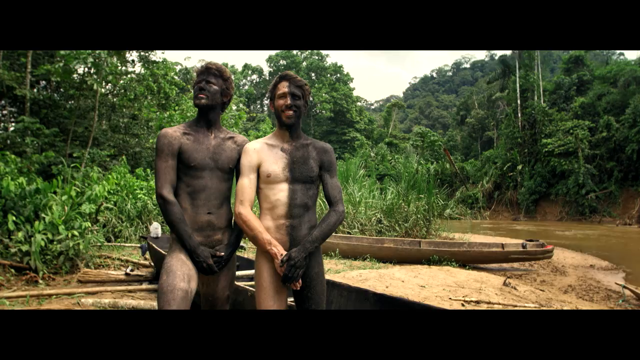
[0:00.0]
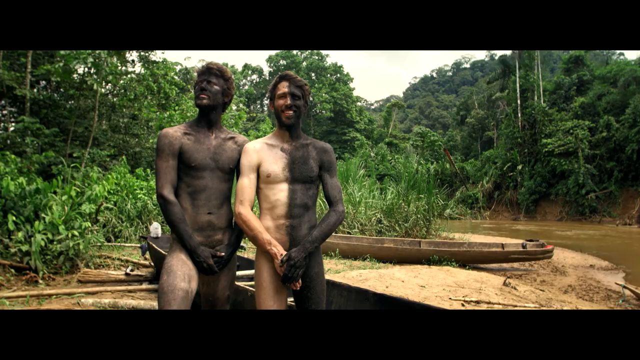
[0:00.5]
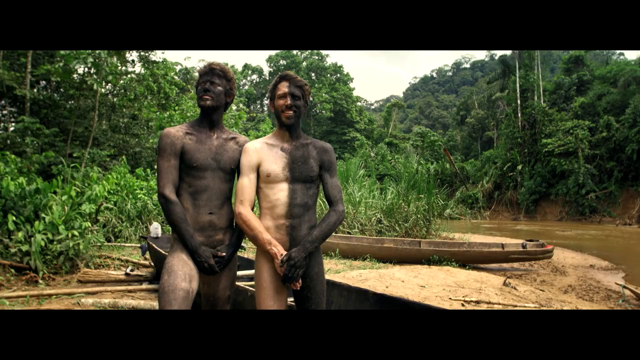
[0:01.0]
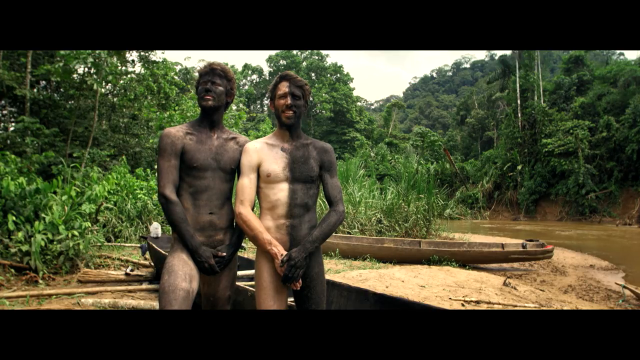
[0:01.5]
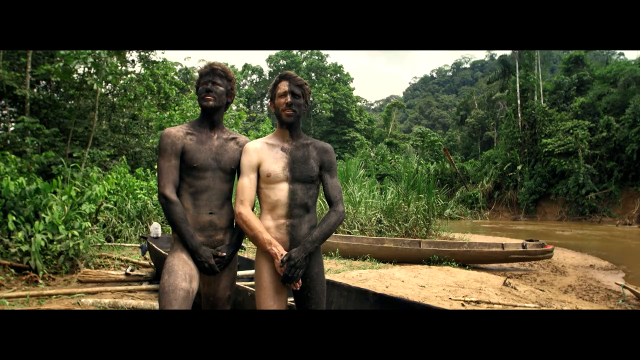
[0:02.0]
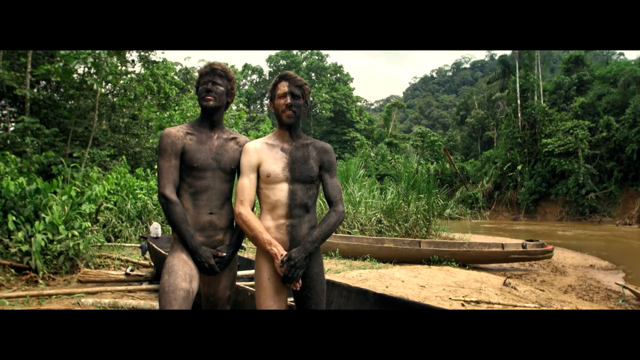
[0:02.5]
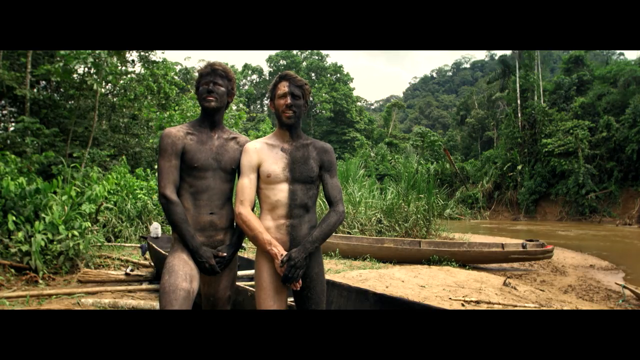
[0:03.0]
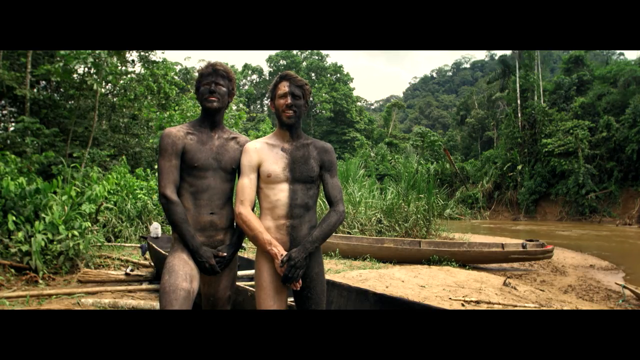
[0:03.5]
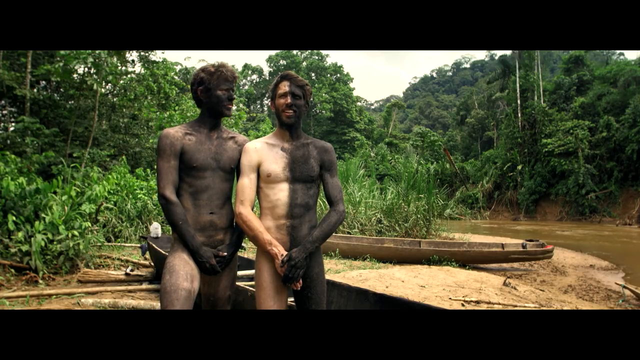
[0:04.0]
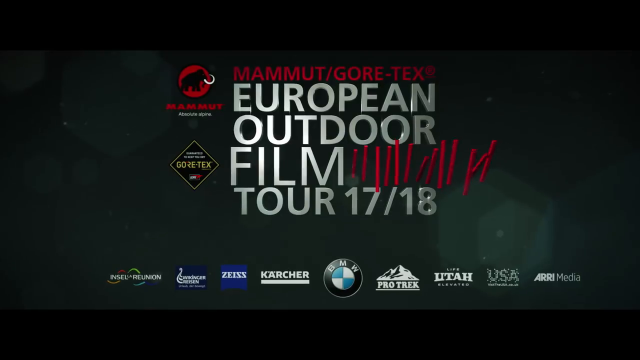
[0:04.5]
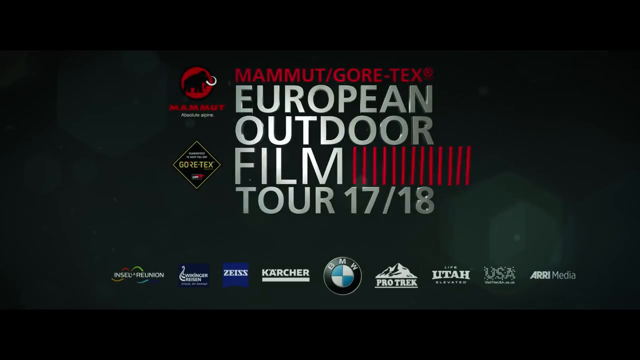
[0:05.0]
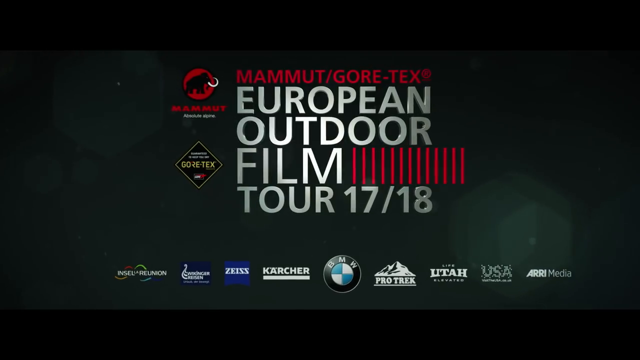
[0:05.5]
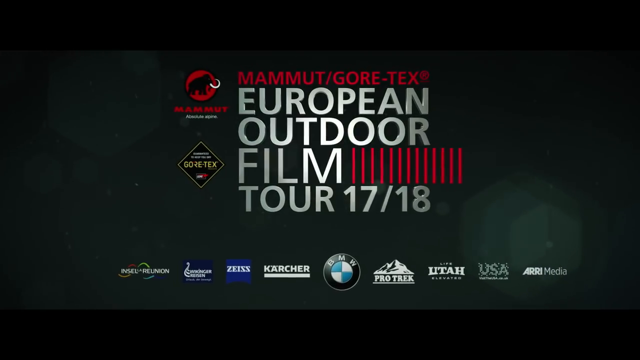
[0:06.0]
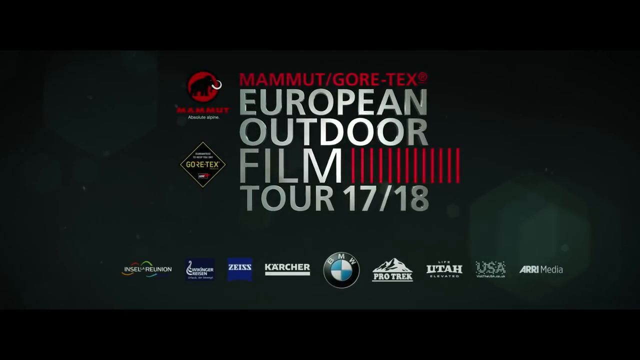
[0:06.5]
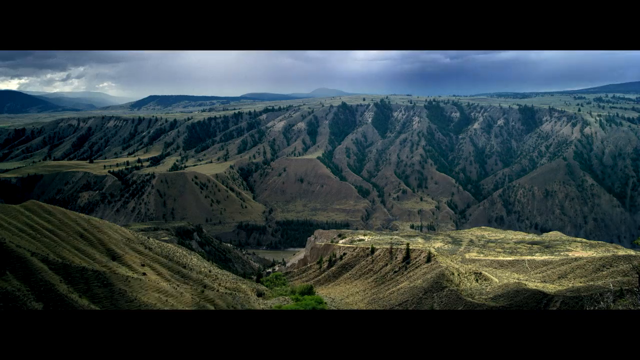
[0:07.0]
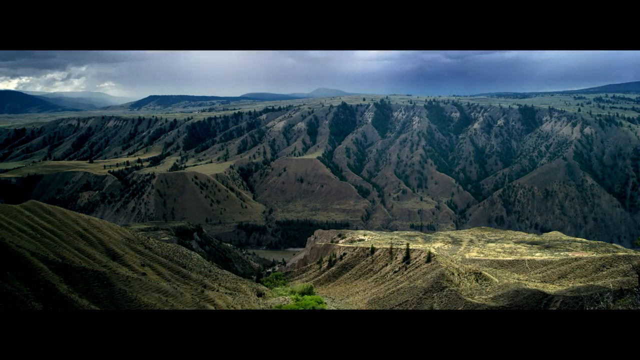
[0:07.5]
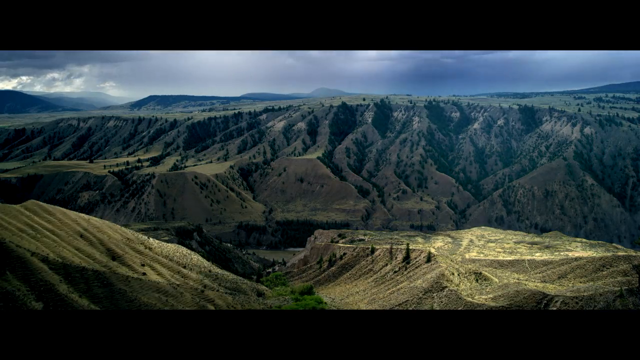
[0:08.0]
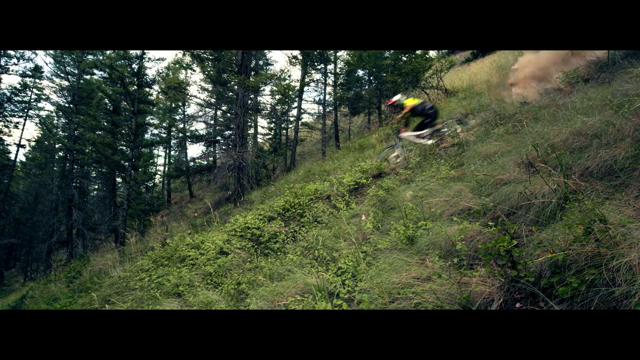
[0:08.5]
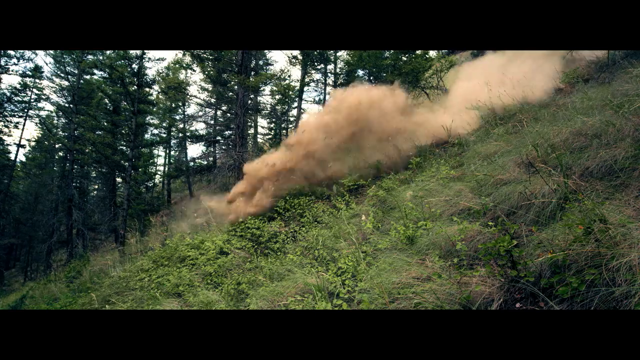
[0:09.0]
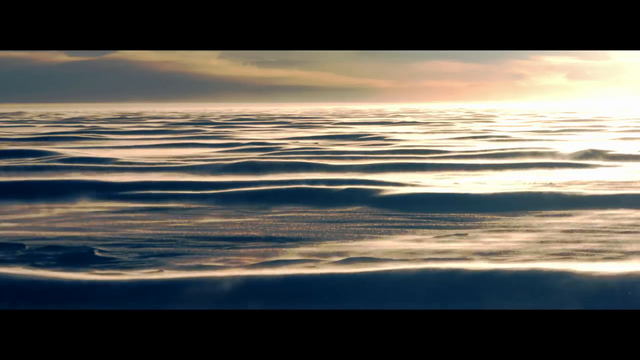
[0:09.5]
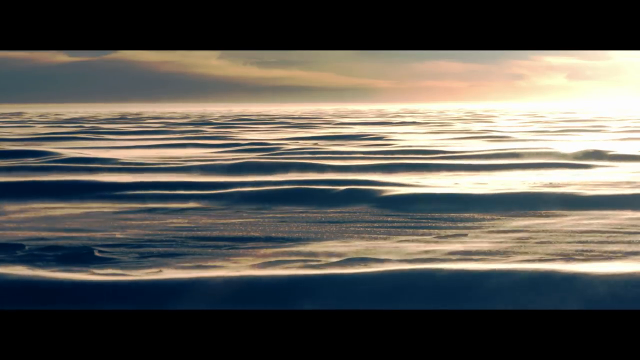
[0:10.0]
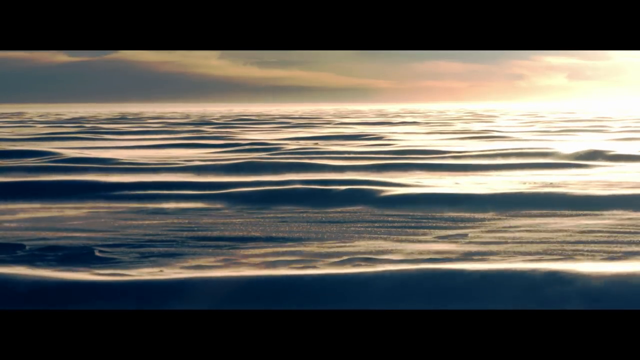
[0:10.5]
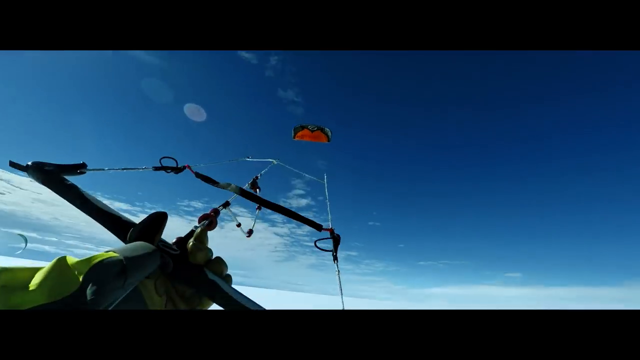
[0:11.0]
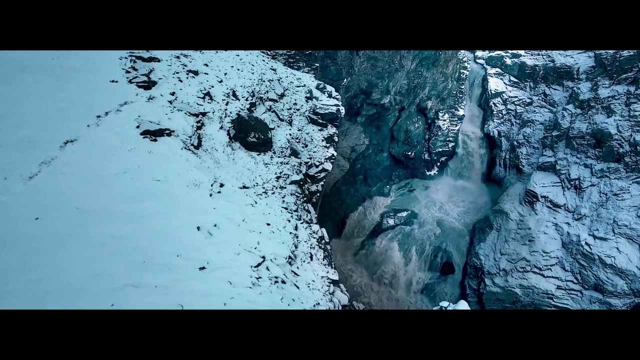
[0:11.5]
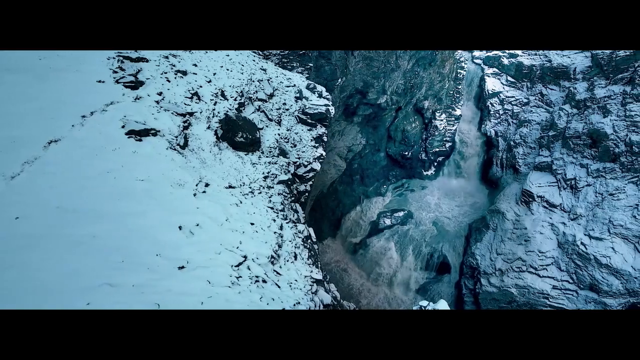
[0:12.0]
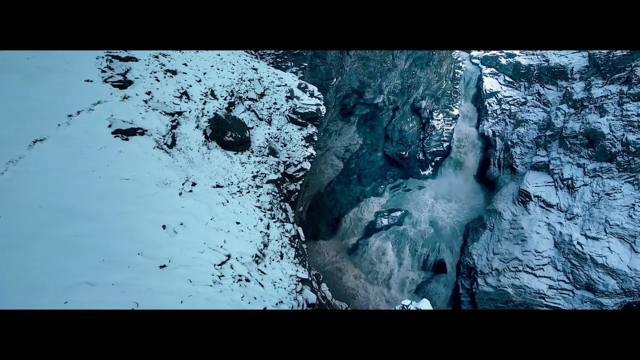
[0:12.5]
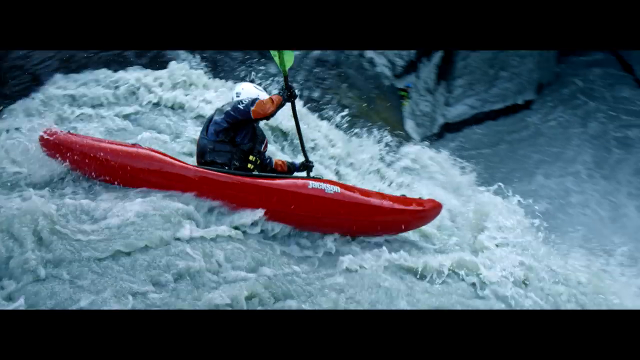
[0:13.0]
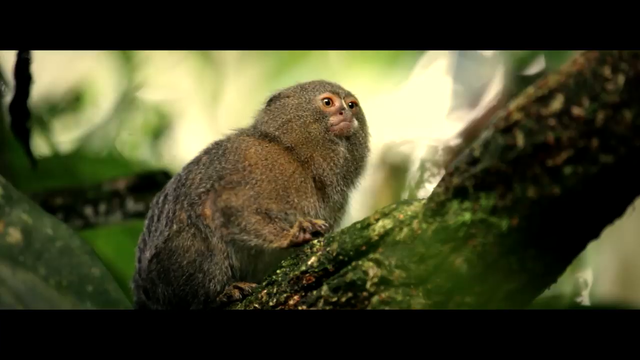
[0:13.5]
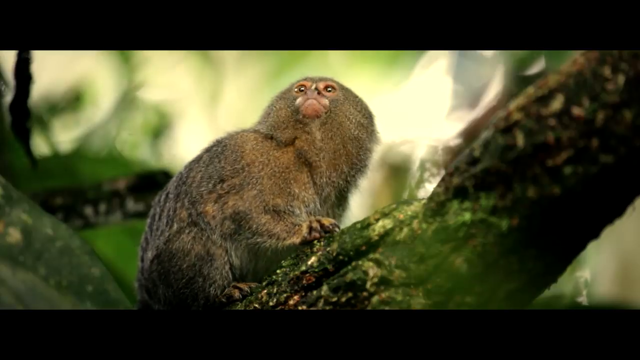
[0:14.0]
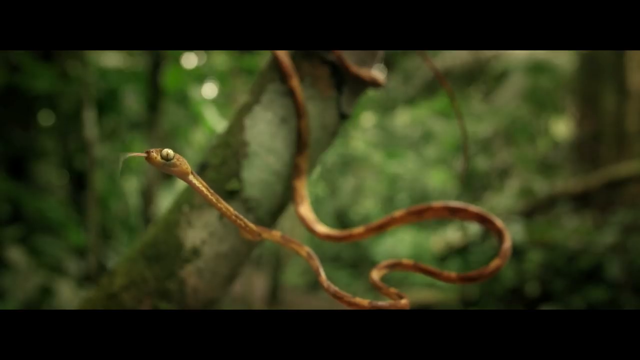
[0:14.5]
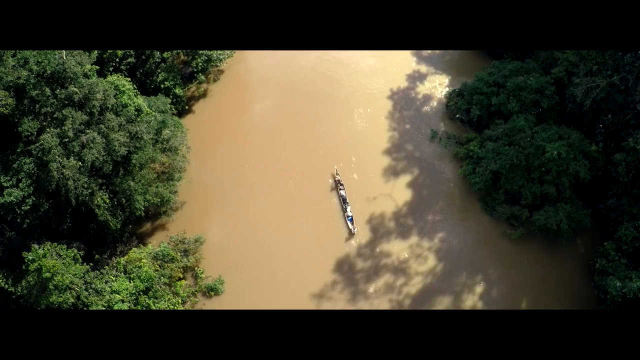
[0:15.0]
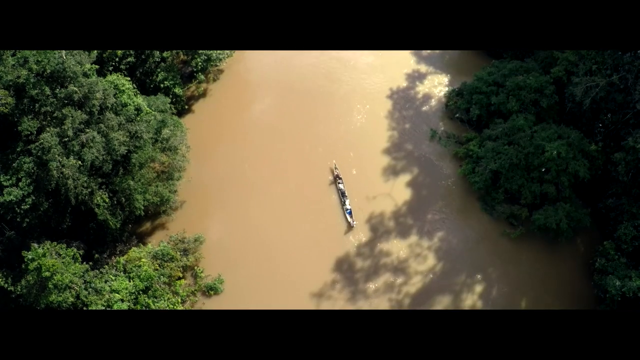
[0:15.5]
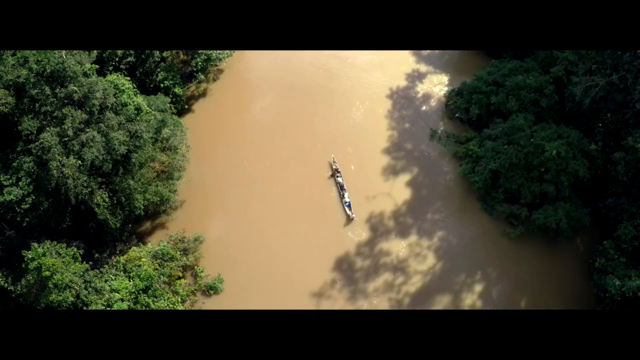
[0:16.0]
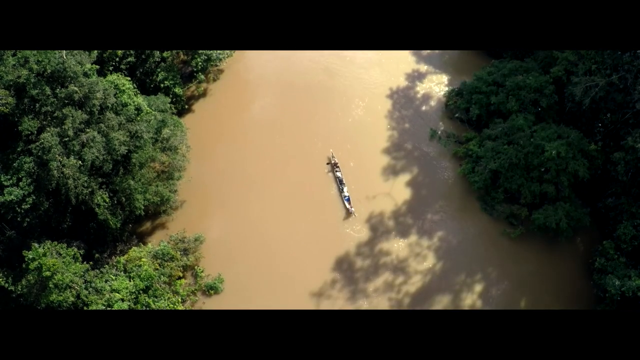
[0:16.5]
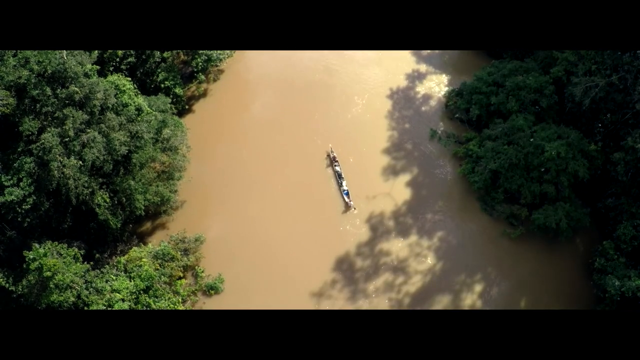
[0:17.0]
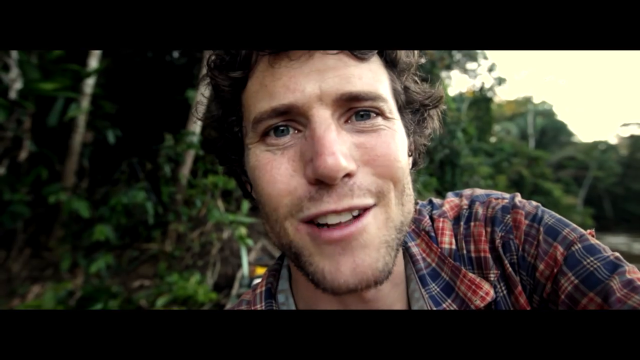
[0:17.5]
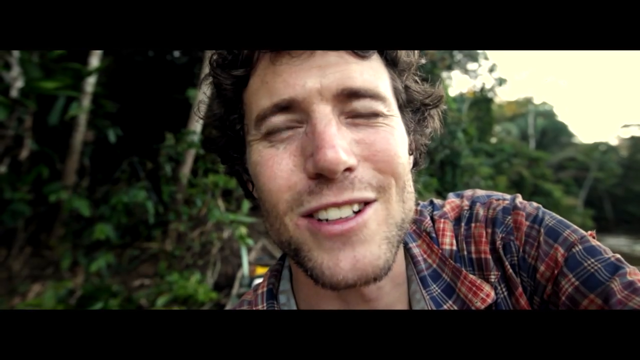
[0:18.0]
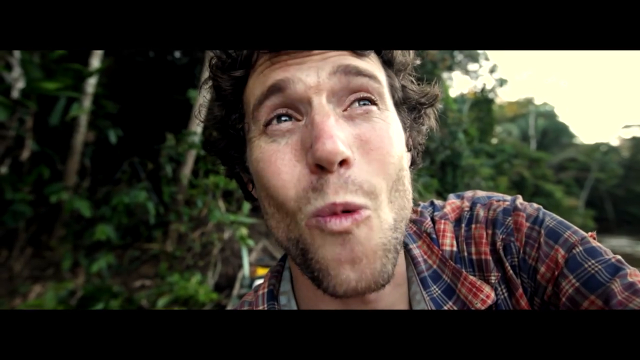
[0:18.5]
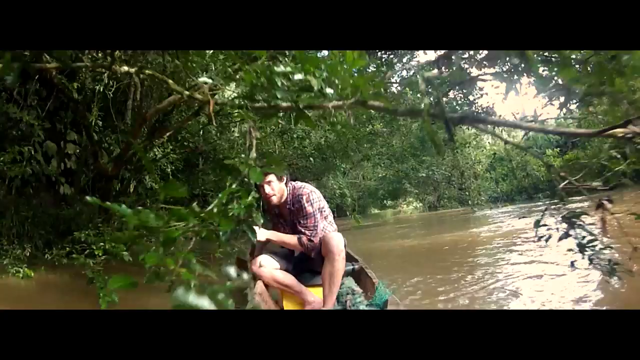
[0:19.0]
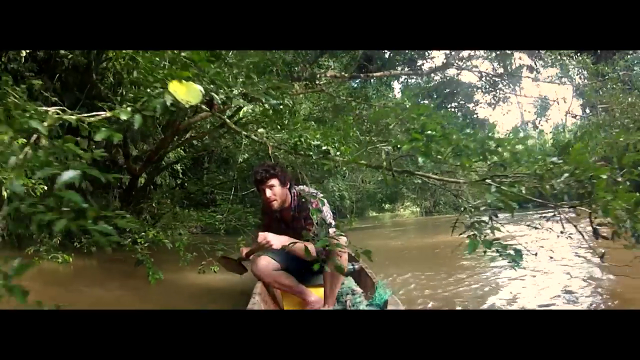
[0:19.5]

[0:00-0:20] Two men stand beside each other. The man on the left has short curly hair and is fully covered in a black powder, while the man on the right is covered in the black powder on only one half of his body, his left side. Behind them is a riverside with muddy water and a lot of green, and the weather is cloudy. An animated title screen appears briefly, with many sponsor logos at the bottom; above them, in the middle of the screen, "Mammut/Gore Tex" is written in red, with the text "European Outdoor Film Tour 17-18" underneath. A very brief shot of a mountain landscape follows: the ground is slanted in the shot, seen from the top of the mountain on the right down to the left, and a cyclist passes by very fast, leaving a cloud of dirt behind him. For a couple of seconds a desert appears during sunset or sunrise; the light casts very dark shadows on the sand, and the wind moves it slightly. Next comes a very brief video of the sky and a parachuter, then a very short video of a river in a rocky mountain landscape where everything is covered in snow. A man rides a kayak down a small waterfall. A close-up shows a very small monkey on a tree branch, and a long snake hangs from a tree. An aerial shot shows a muddy river with a ship-like vehicle sailing through it. A close-up selfie video shows a man with curly hair, and then the same man is seen sailing through the river.